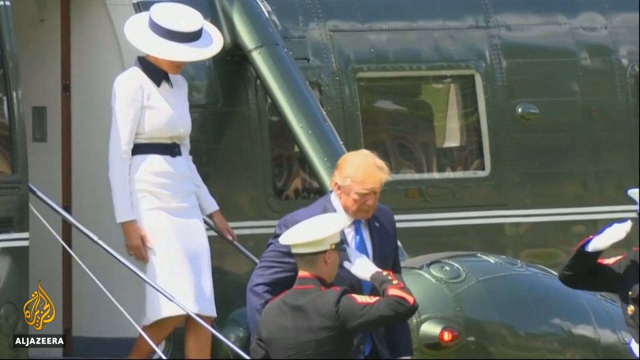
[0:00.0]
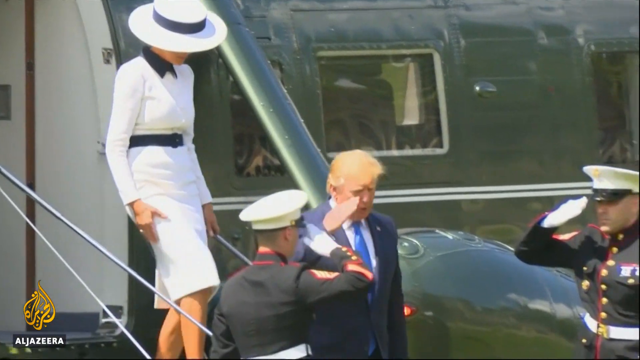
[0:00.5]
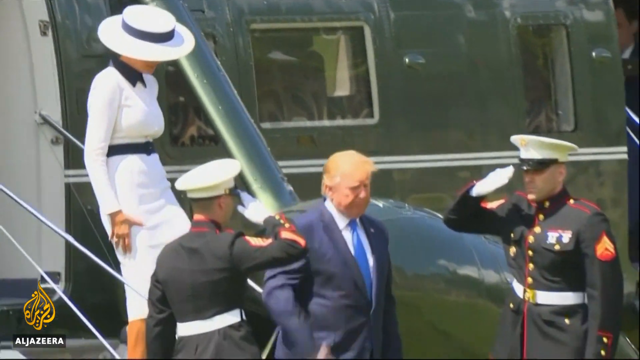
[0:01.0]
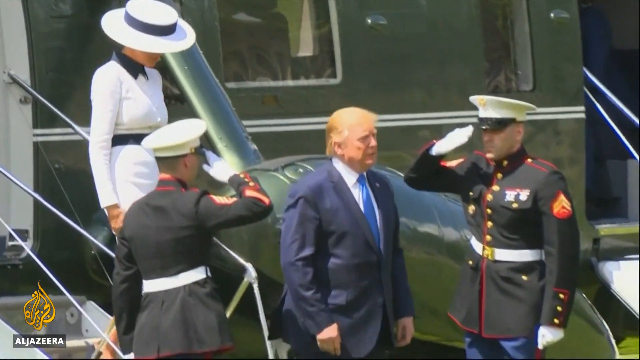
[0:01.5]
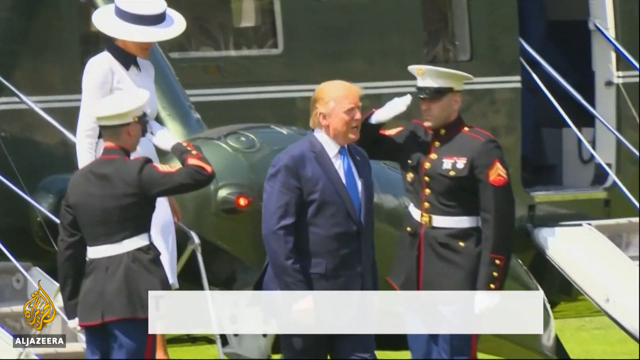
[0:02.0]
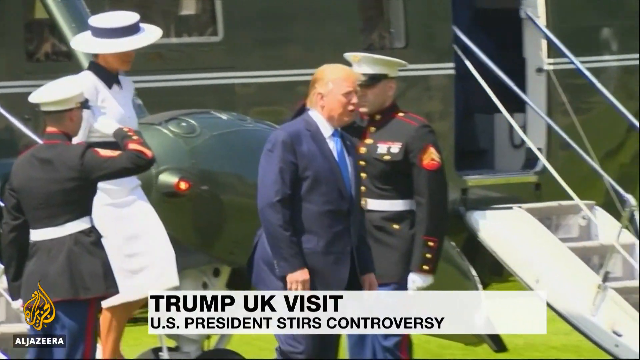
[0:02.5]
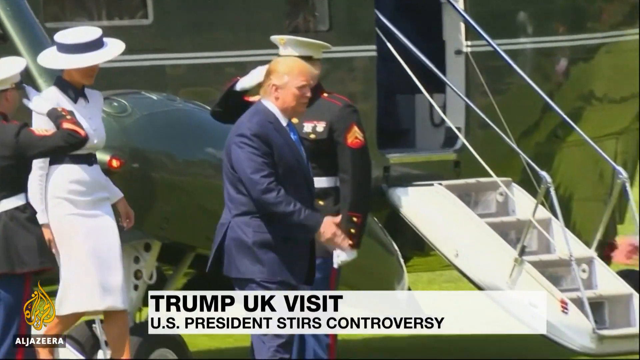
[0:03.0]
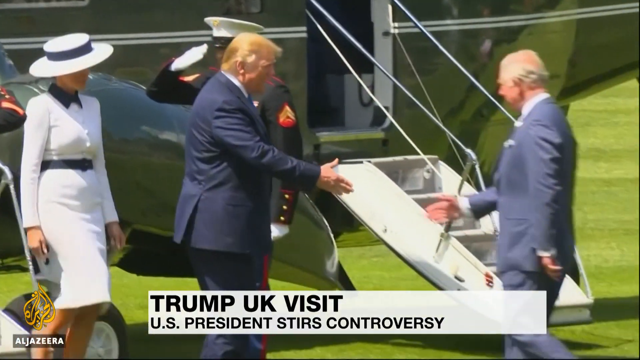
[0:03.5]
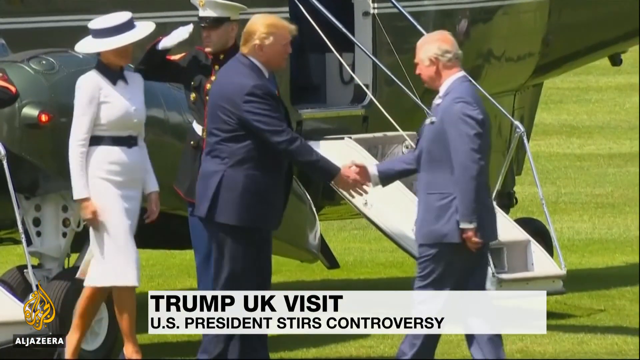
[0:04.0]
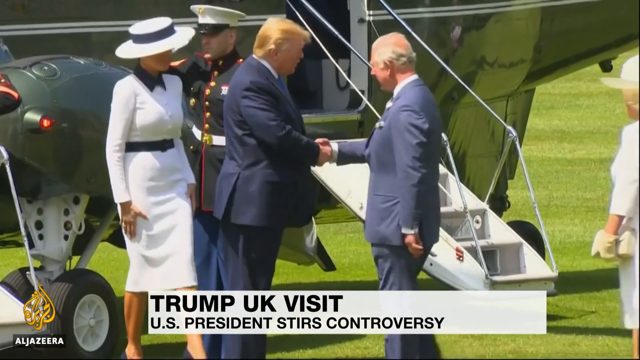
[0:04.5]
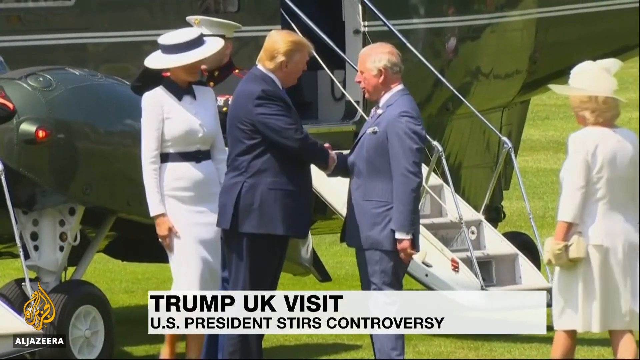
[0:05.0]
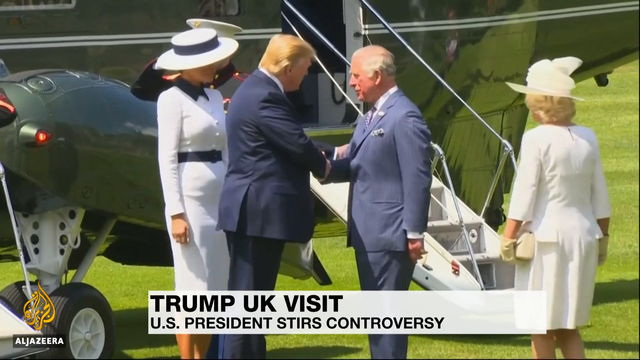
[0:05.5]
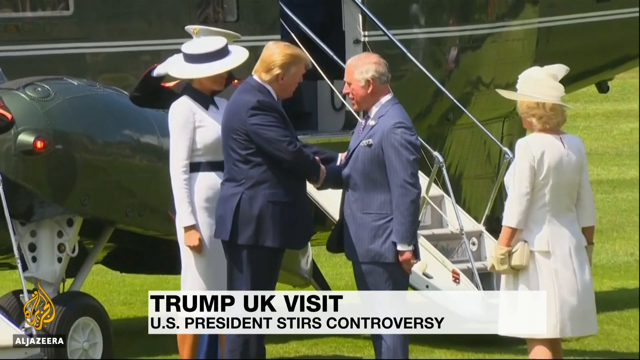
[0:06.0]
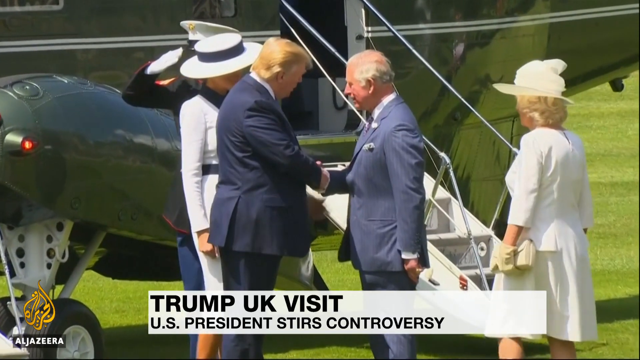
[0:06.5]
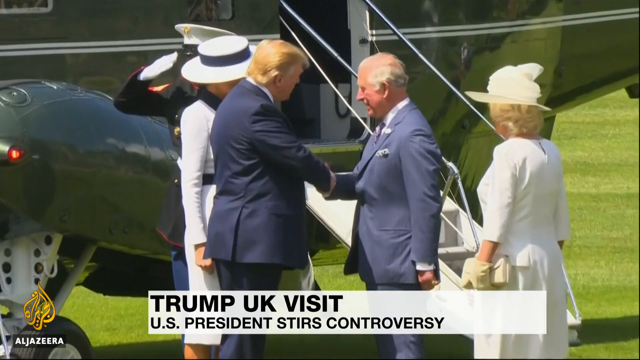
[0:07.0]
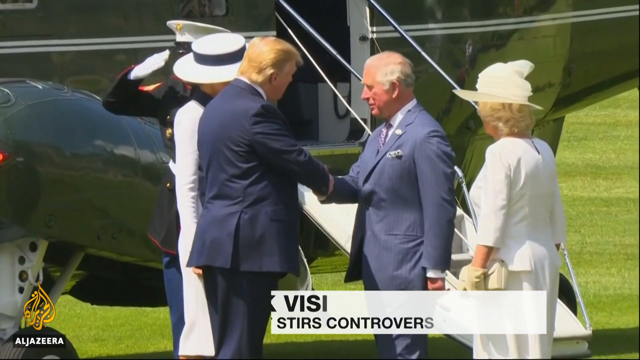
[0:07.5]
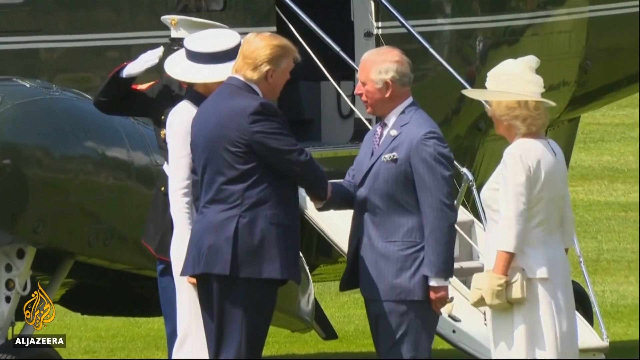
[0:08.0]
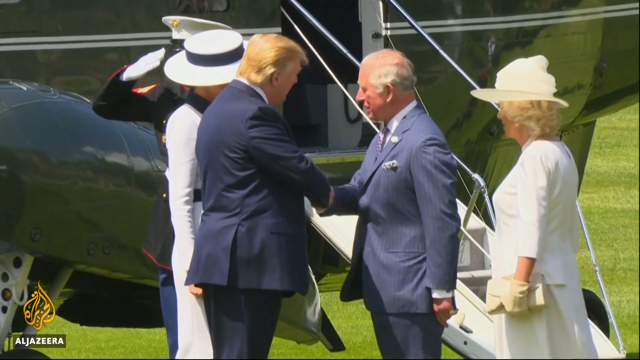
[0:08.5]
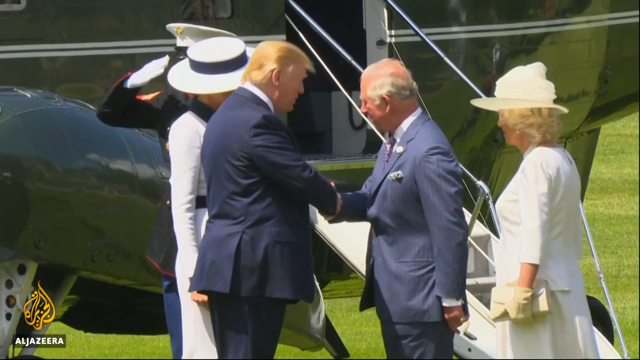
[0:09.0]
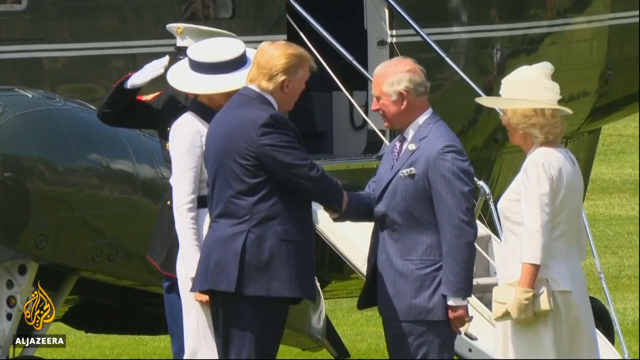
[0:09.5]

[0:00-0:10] Donald Trump is at the bottom of a set of stairs, apparently coming off Air Force One. A Marine at the bottom of the screen, seen from the back, gives a salute with his right hand. Behind Trump, toward the top of the screen, is apparently Melania in a white dress and a white hat. Trump walks between two Marines who salute him with their right hands, and he salutes with his right hand. Text at the bottom of the screen reads "Trump UK visit US president stirs controversy". Trump holds out his right hand to shake the hand of another man walking in from the right side of the screen; he gives a typical Trump handshake, putting his left hand on the man's arm. A woman in white walks in from the right side of the screen, and the two men talk.